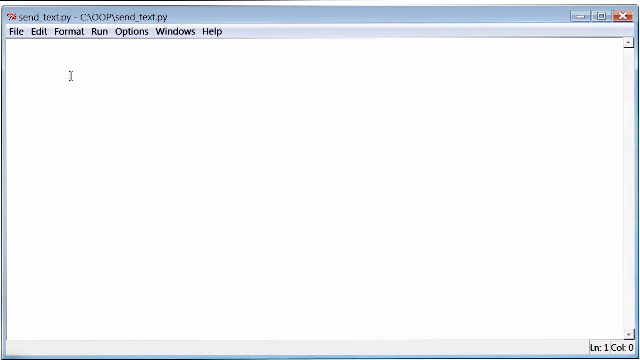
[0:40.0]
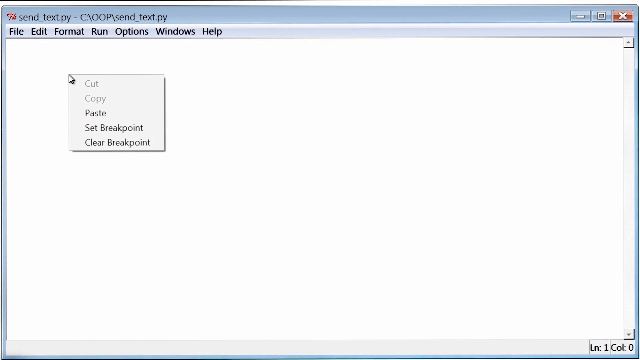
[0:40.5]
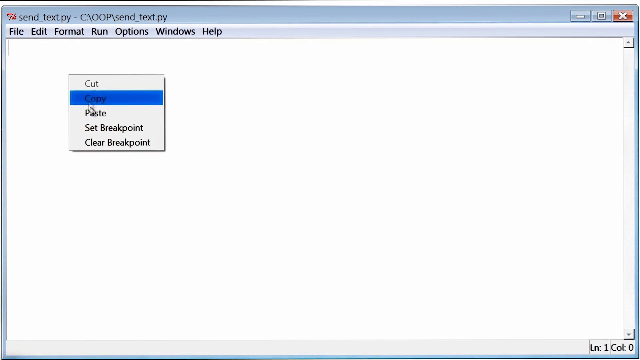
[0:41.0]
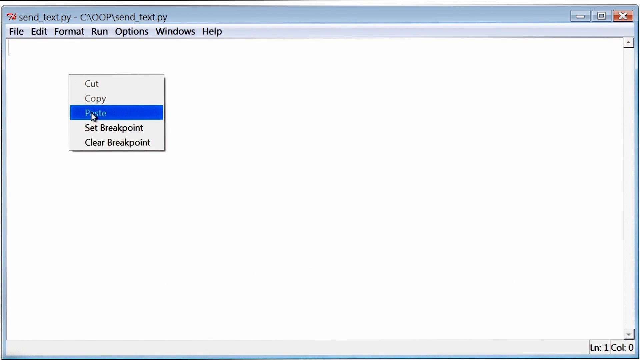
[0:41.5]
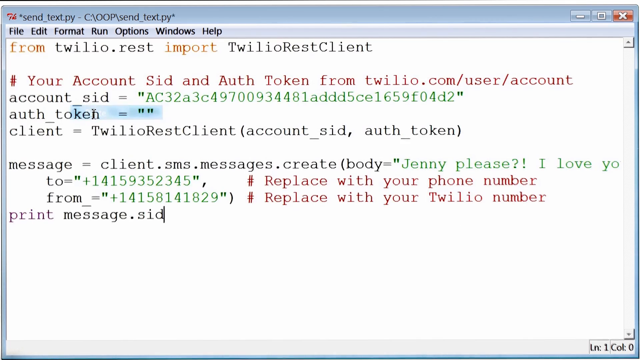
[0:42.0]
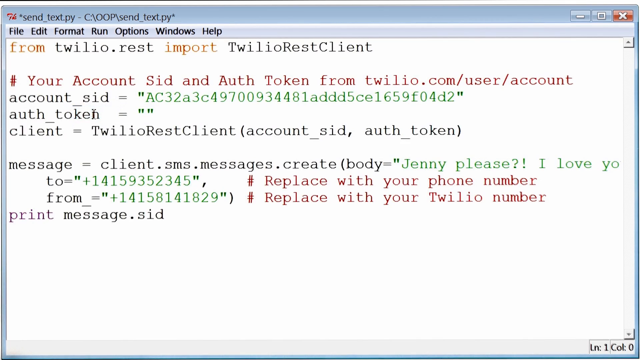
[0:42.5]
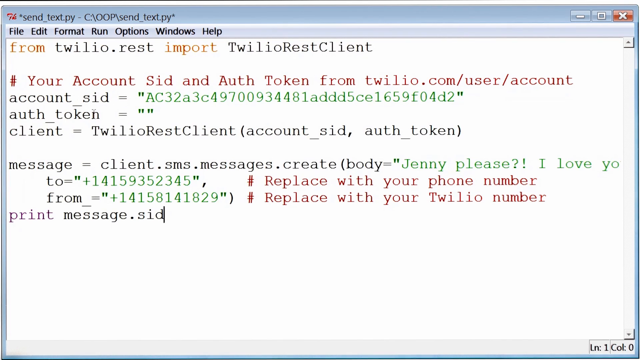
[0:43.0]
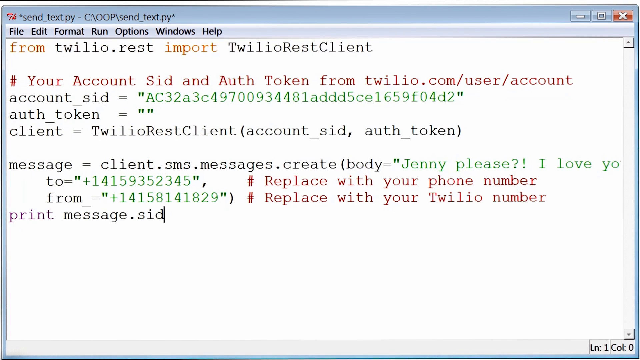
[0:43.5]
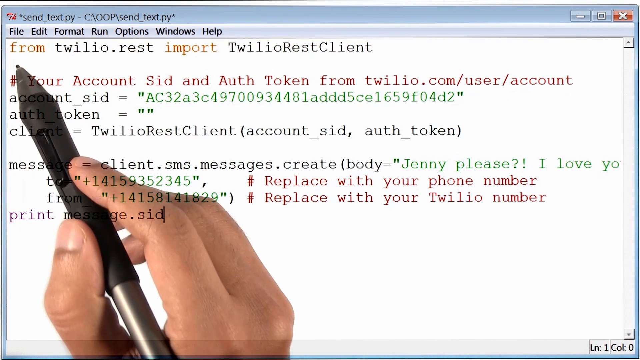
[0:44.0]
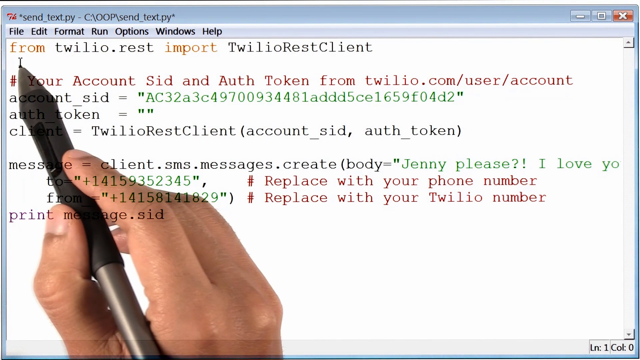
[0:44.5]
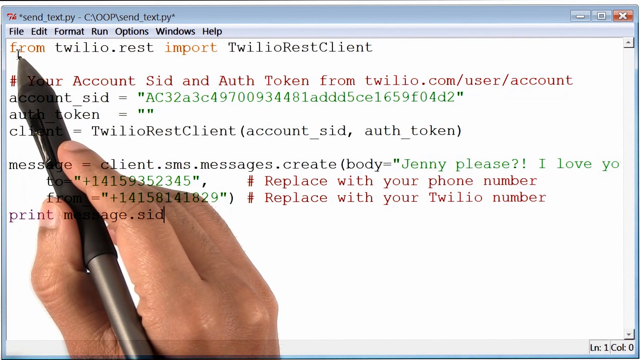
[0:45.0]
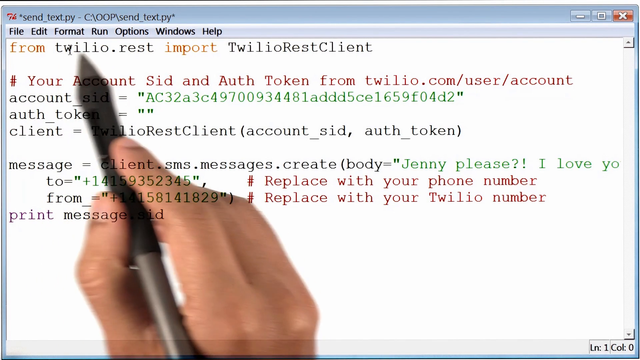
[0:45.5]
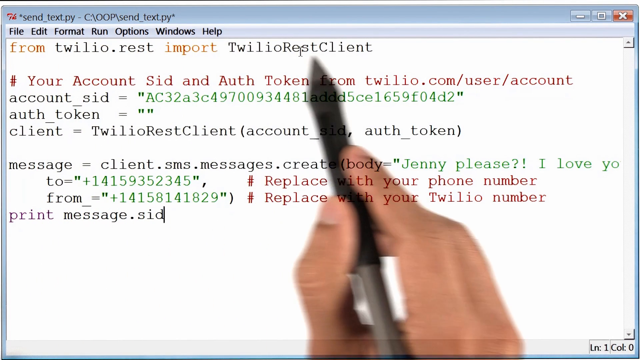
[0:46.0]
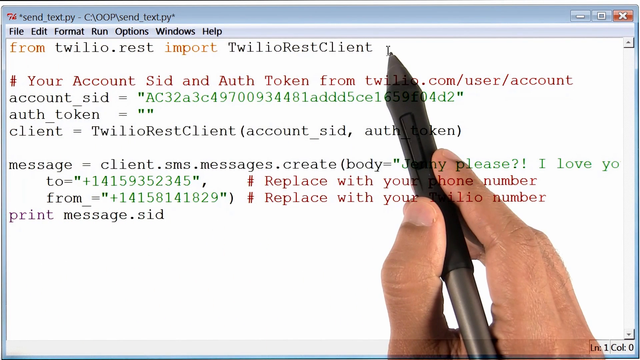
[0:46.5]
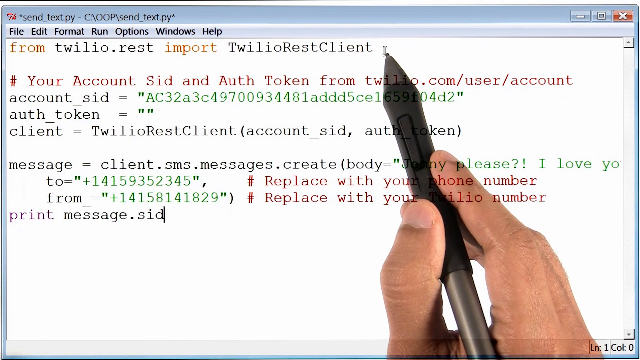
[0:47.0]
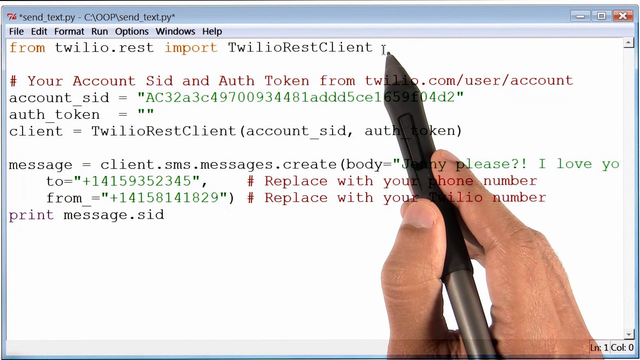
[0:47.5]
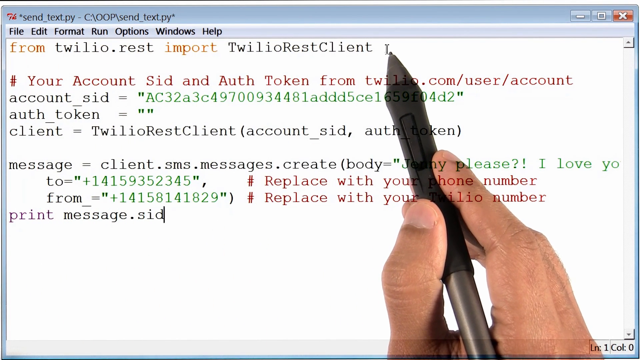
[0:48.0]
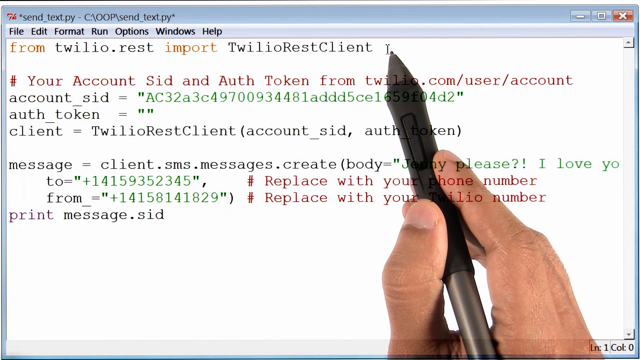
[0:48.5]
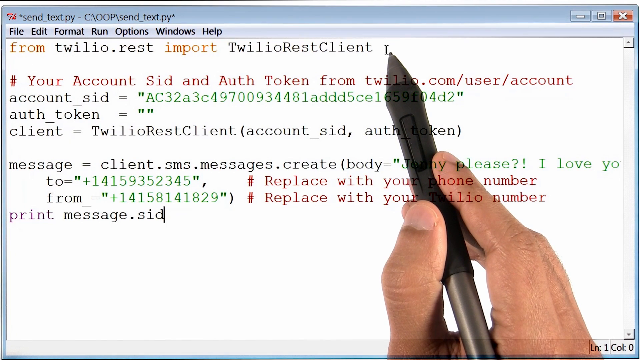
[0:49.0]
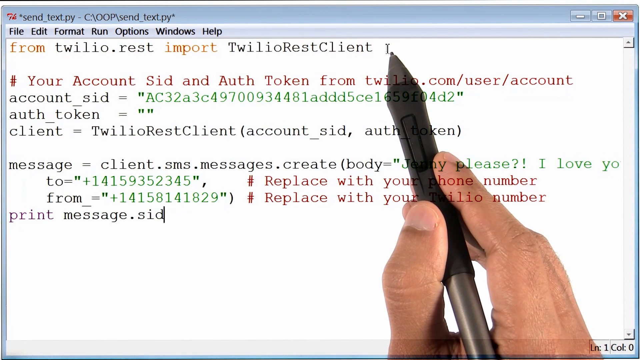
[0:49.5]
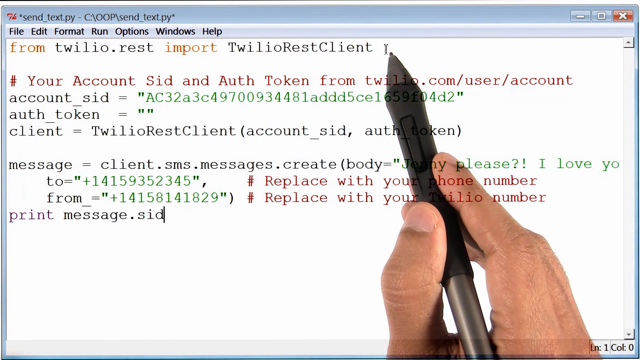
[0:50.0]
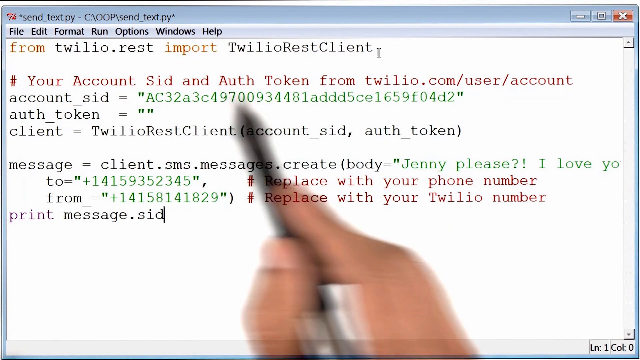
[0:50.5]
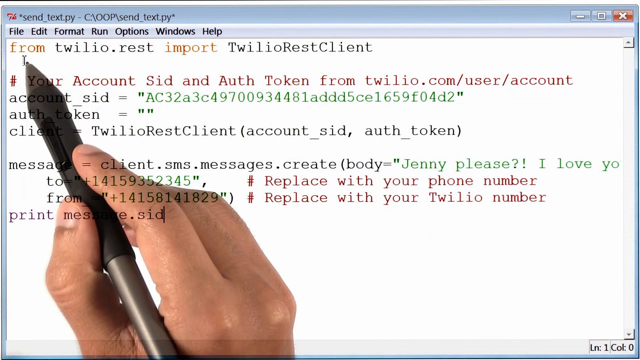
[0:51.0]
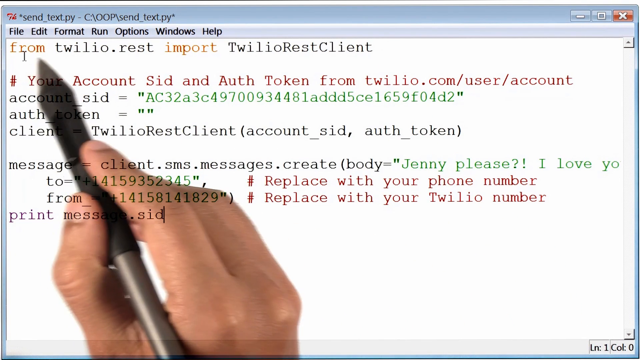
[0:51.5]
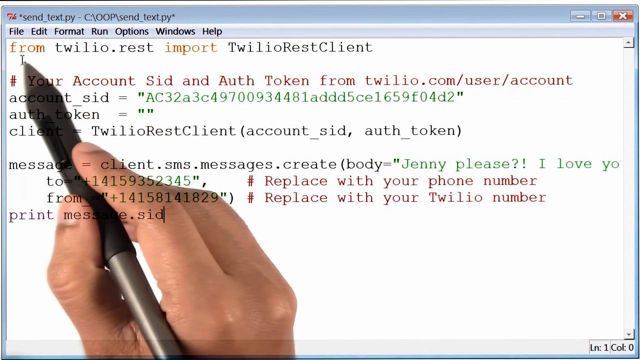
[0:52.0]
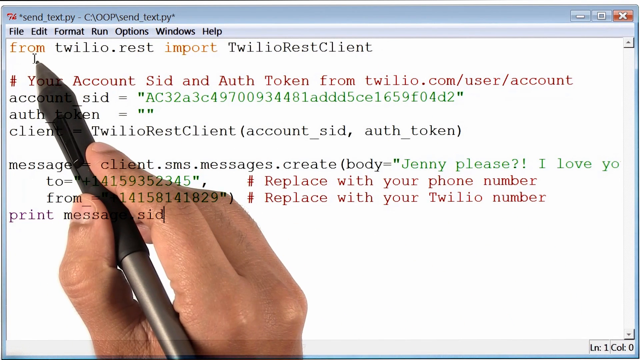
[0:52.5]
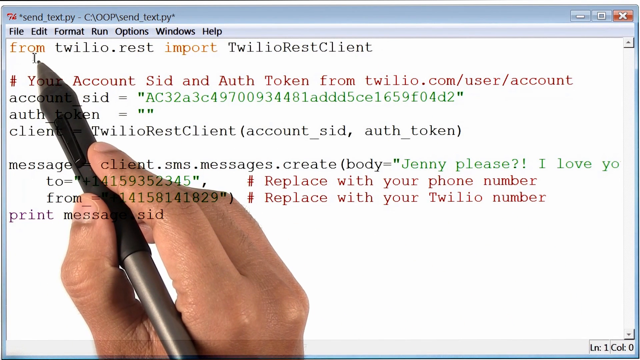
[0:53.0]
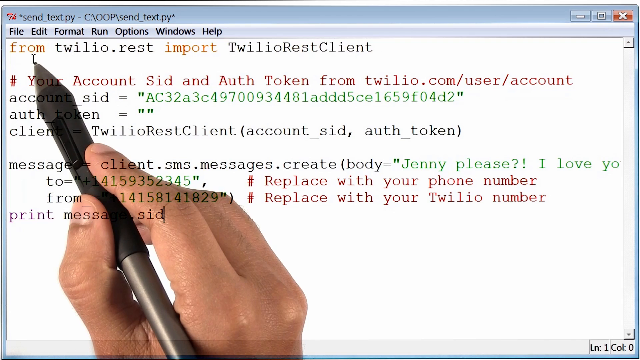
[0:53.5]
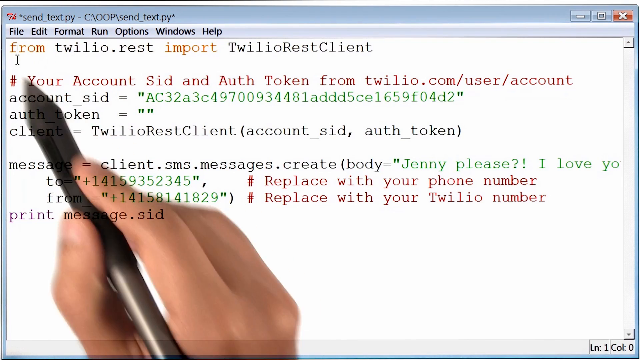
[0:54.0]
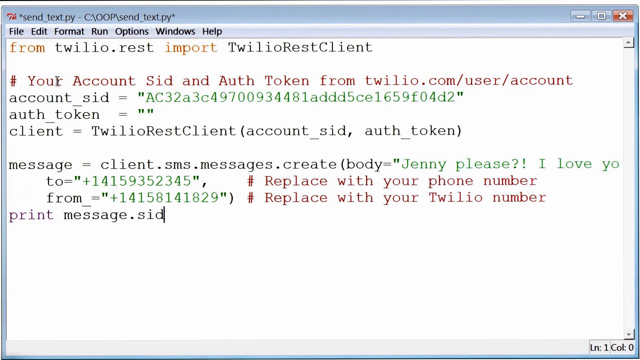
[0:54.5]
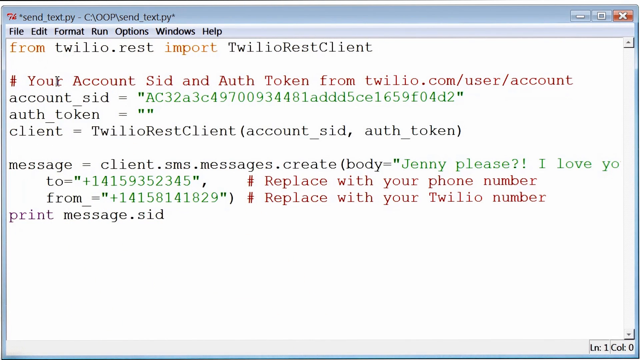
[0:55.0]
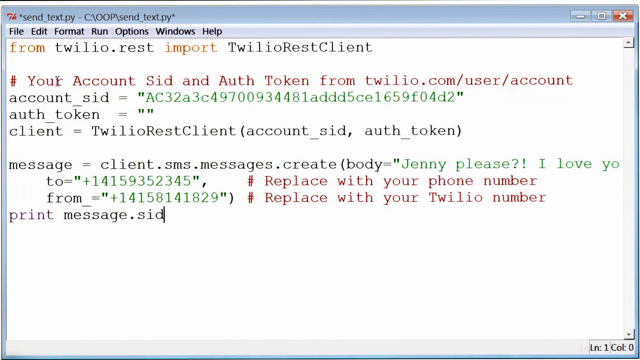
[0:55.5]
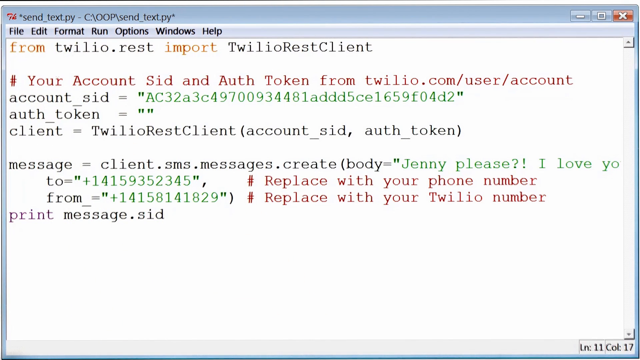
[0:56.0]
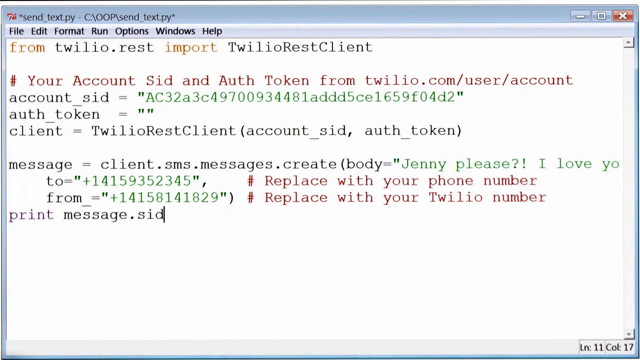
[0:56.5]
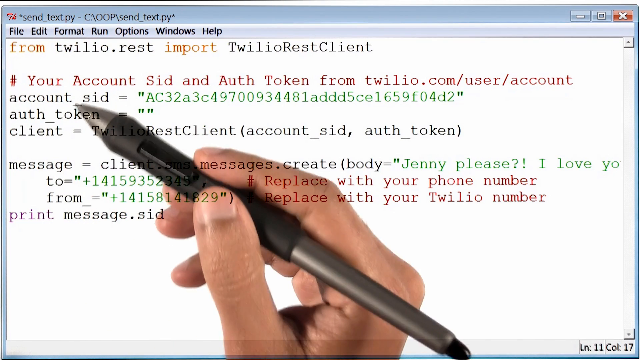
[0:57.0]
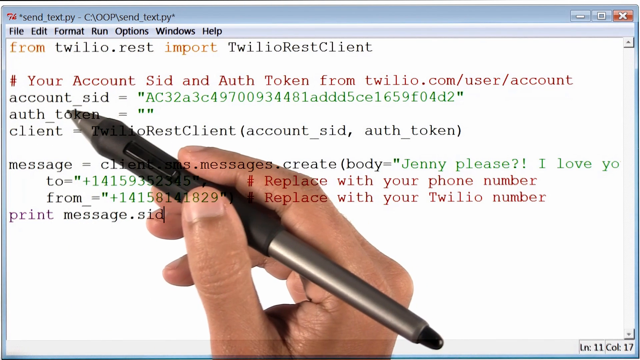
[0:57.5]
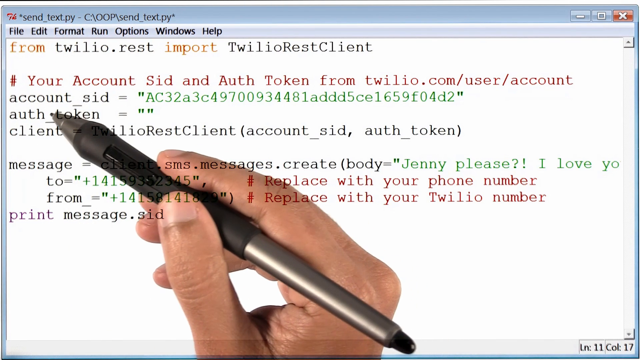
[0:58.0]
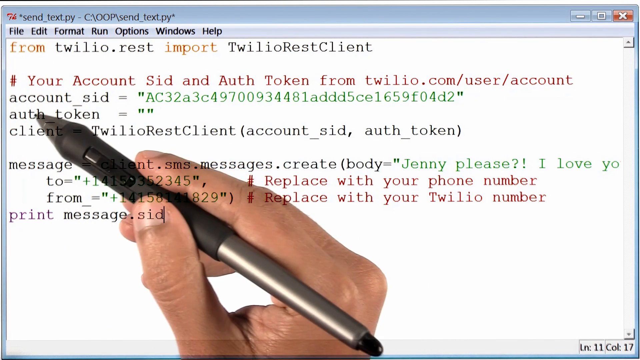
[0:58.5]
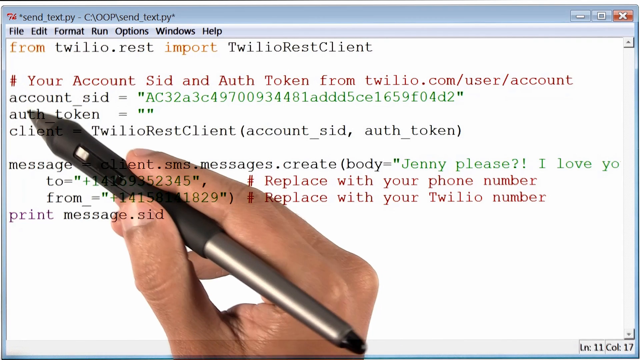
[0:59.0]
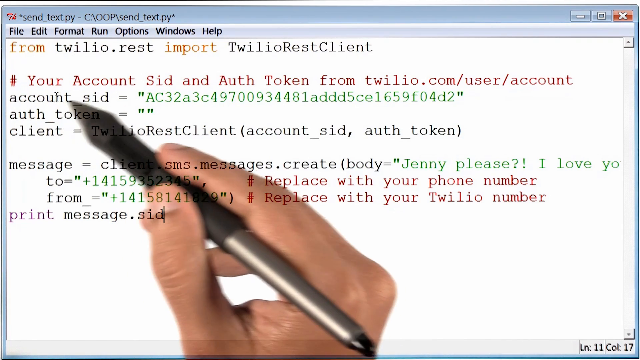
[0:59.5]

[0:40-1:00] From the white screen, he opens a new text screen and, using the smart pen, pastes in the code he copied and highlighted. He highlights some of the code and hovers over the first line, which says "from Twillow.res import Twillow.res client", hovering the smart pen over that line again. He circles the first line of code, puts the pen away, then brings the pen back and hovers over the account ID and the authentication token, continuing to hover.